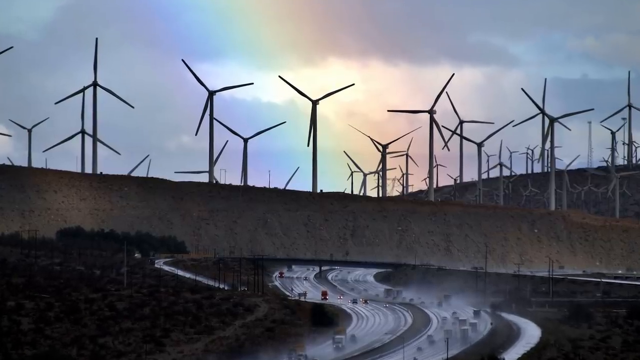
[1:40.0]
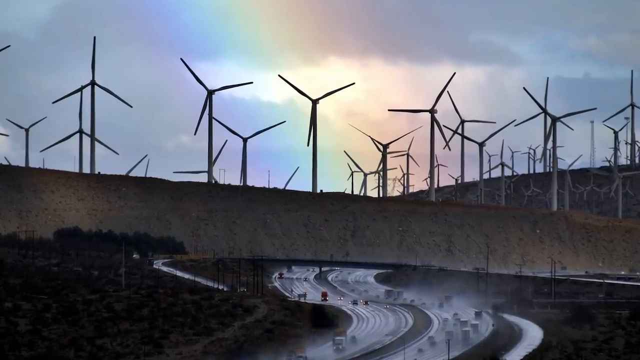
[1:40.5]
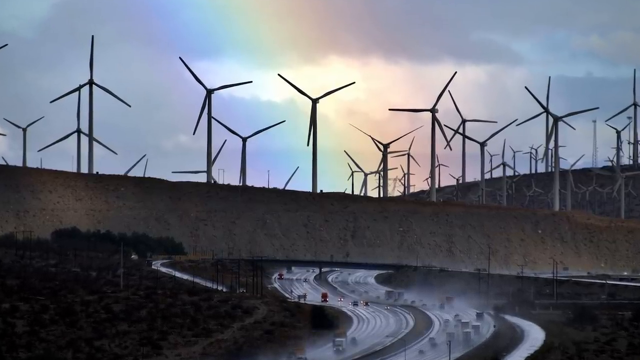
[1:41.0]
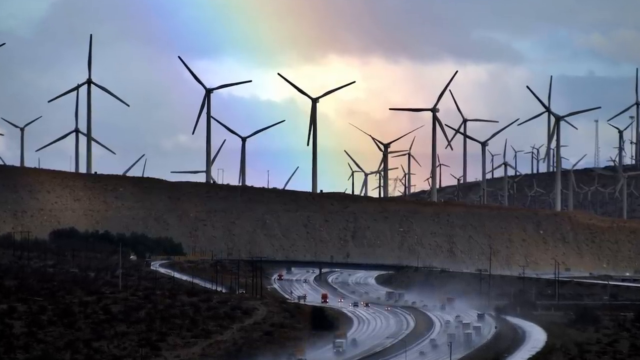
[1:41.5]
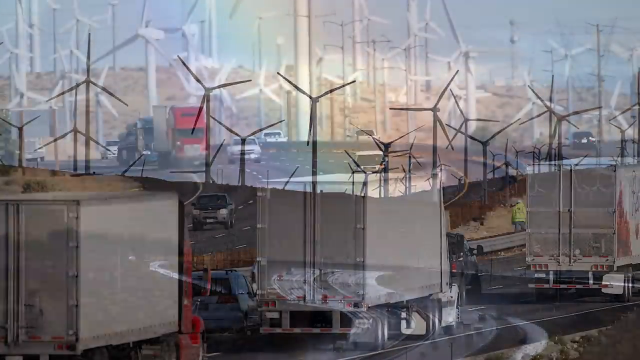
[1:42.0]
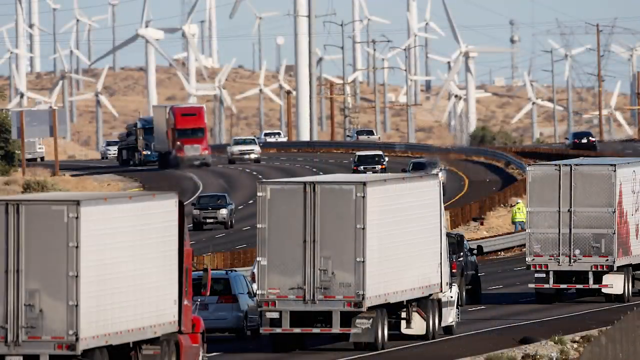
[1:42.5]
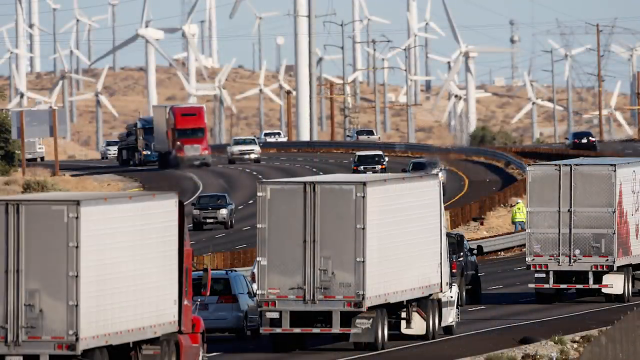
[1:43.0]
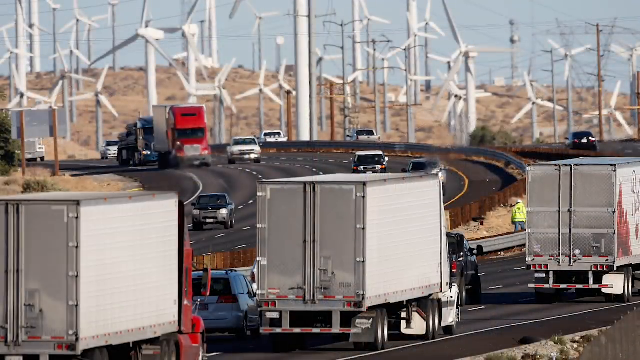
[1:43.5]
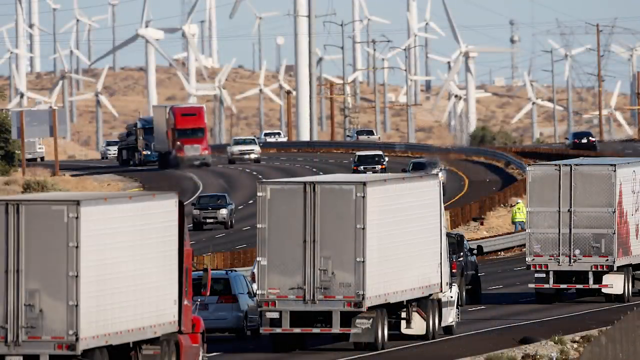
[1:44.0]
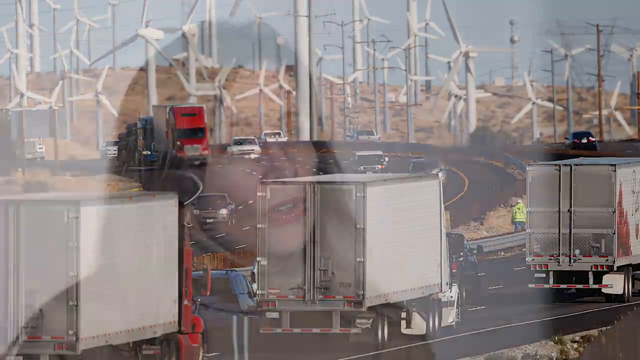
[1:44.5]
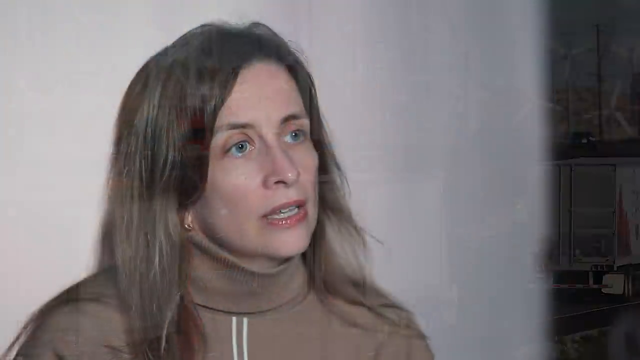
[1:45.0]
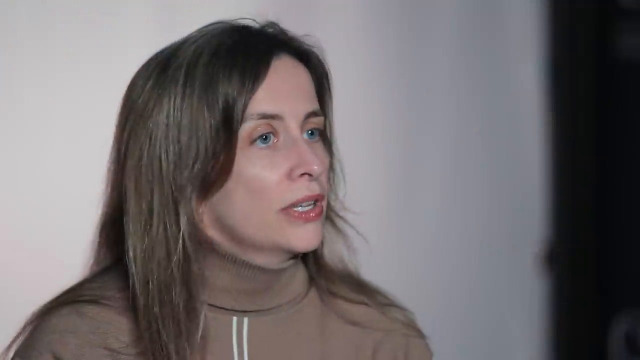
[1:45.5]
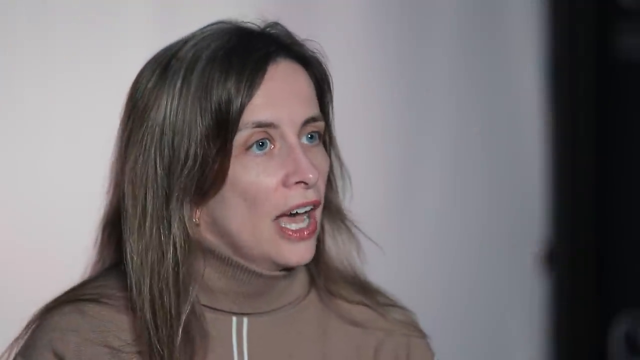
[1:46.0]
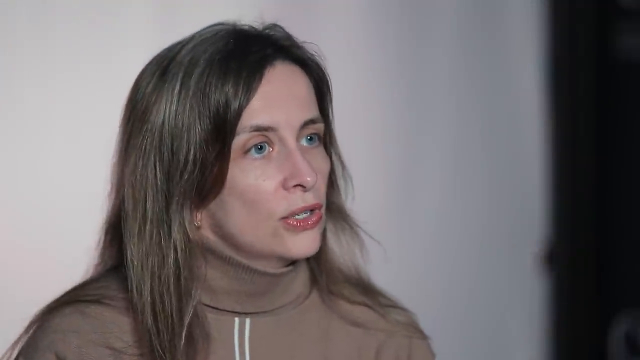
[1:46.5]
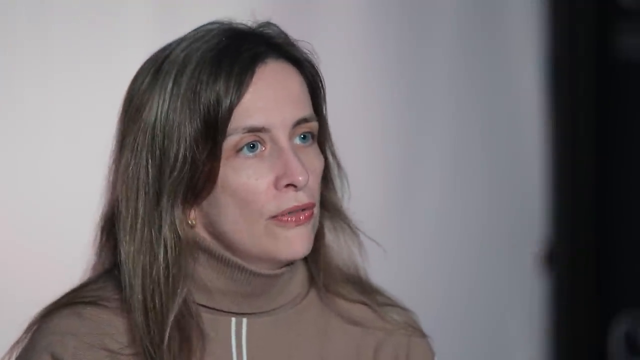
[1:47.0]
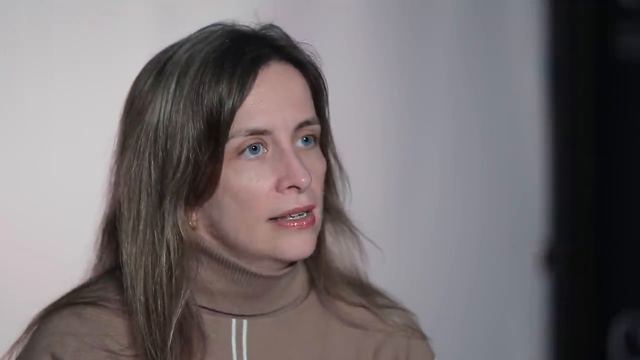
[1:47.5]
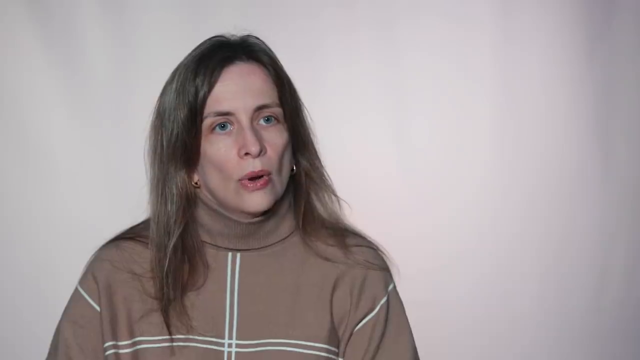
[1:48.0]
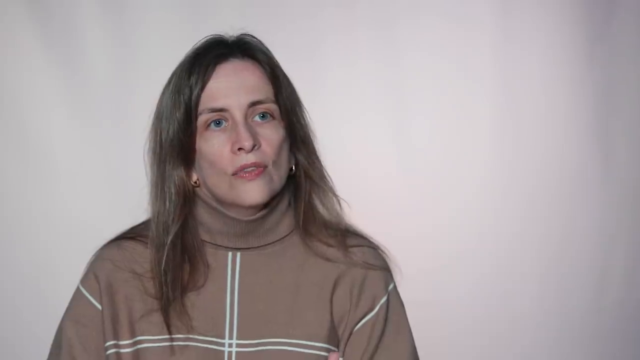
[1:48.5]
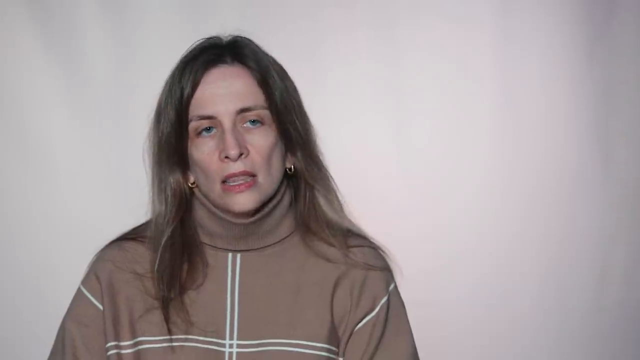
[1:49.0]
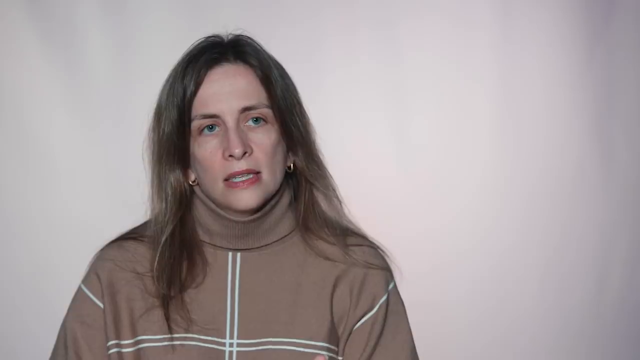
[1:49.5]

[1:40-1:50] Under a grayish sky with a bit of light coming through, a whole field of grayish windmills is up top, and what looks to be a highway is down below. The area is a shimmering grayish color, darker gray on the outer edges, so the kind of ground cannot really be made out. Closer up, white windmills dot the skyline of the open field. A black cemented highway with white lines carries a number of trucks and vehicles along its multiple lanes. The video then returns to the woman with a white complexion, brown hair and red lipstick, wearing a brown turtleneck-like collared top with two white lines going down it, in front of a white wall background with black on the right side, as she talks to the interviewer.